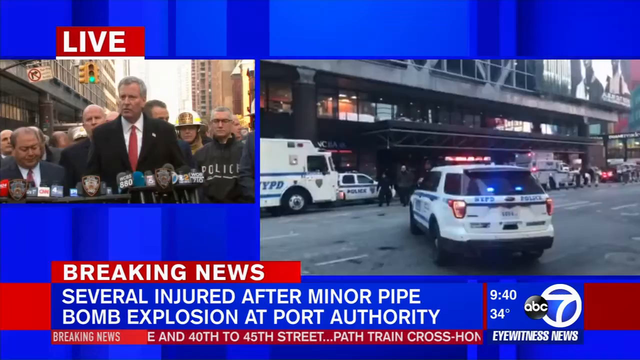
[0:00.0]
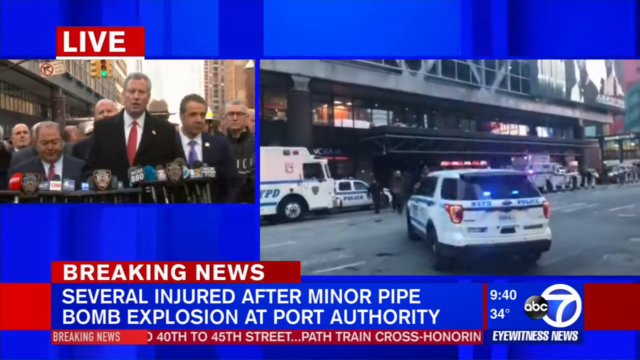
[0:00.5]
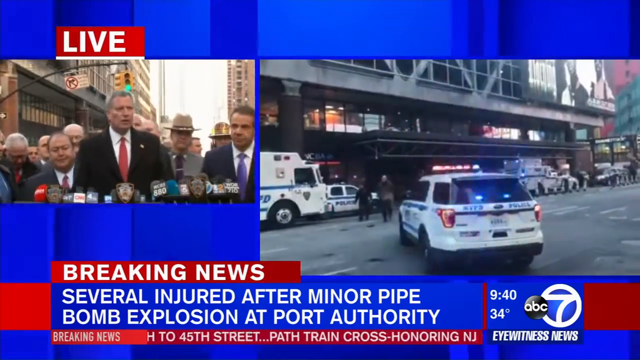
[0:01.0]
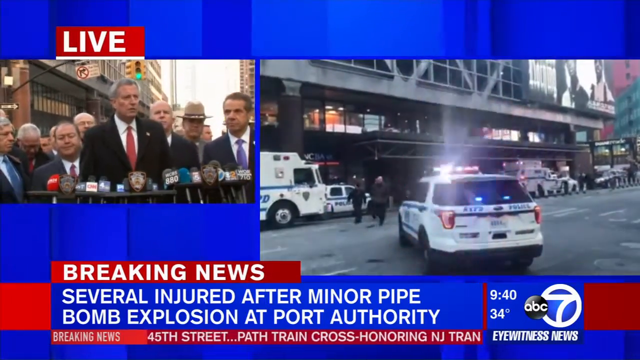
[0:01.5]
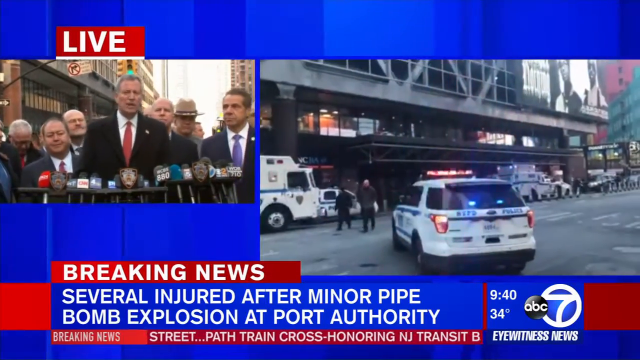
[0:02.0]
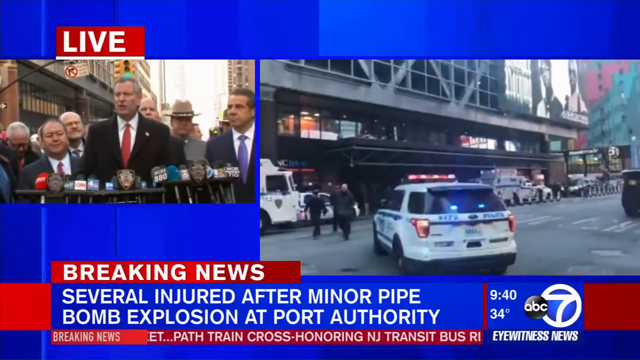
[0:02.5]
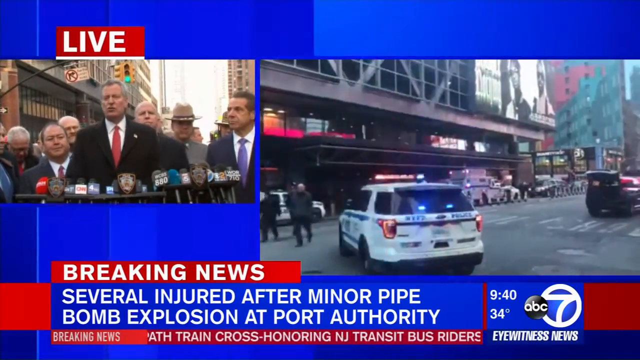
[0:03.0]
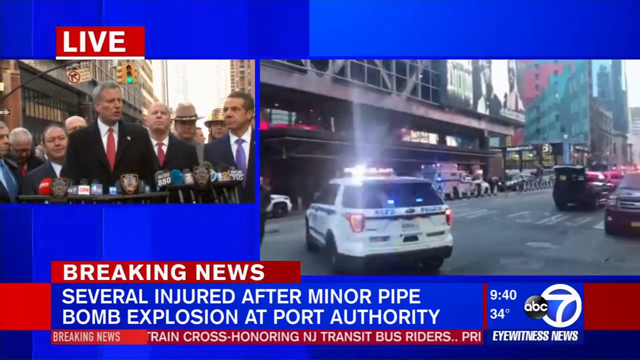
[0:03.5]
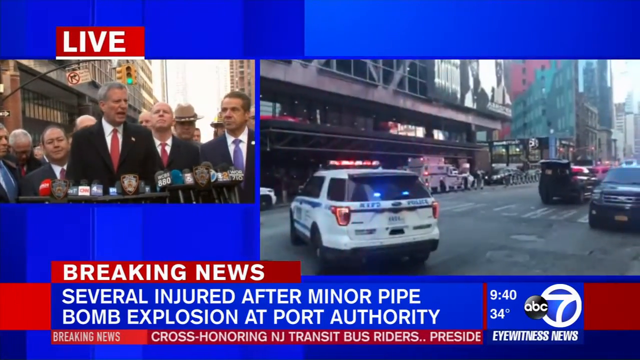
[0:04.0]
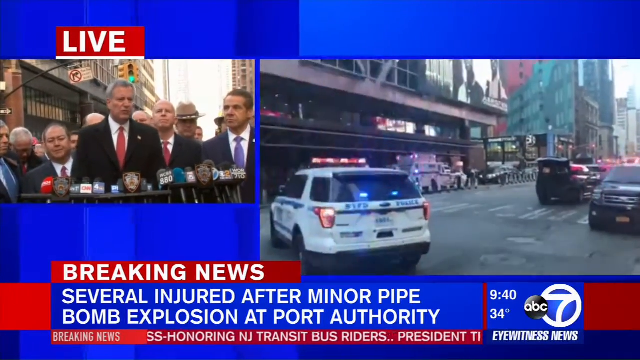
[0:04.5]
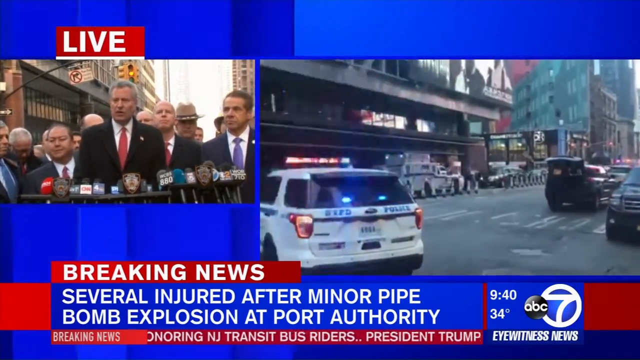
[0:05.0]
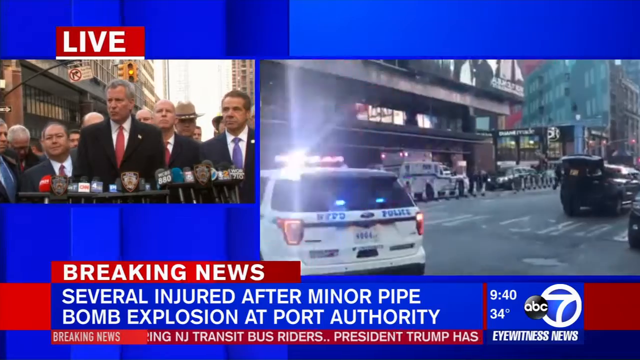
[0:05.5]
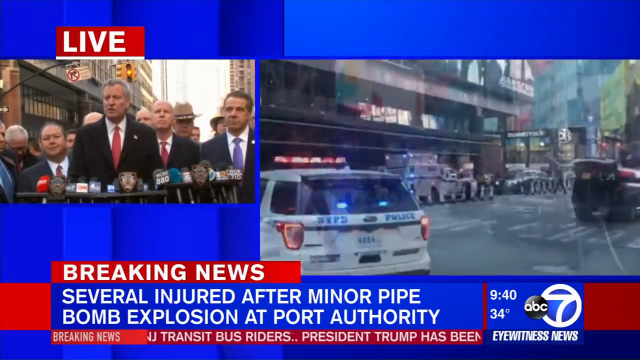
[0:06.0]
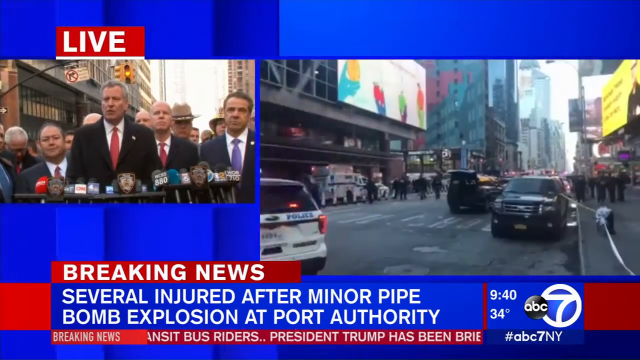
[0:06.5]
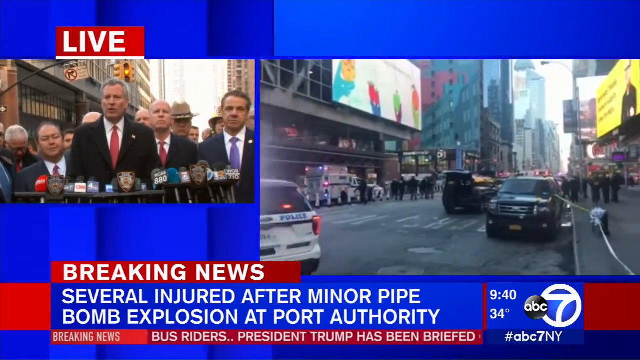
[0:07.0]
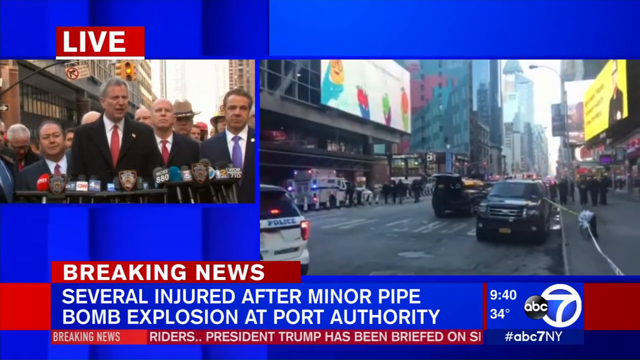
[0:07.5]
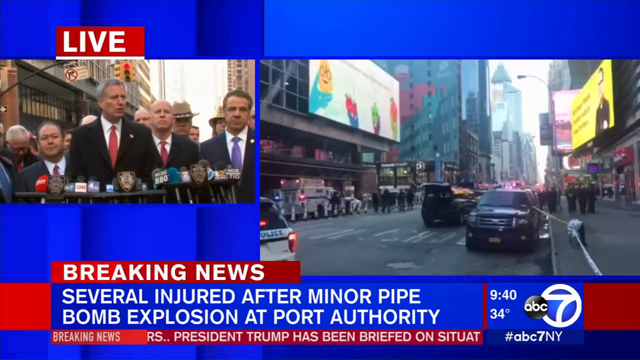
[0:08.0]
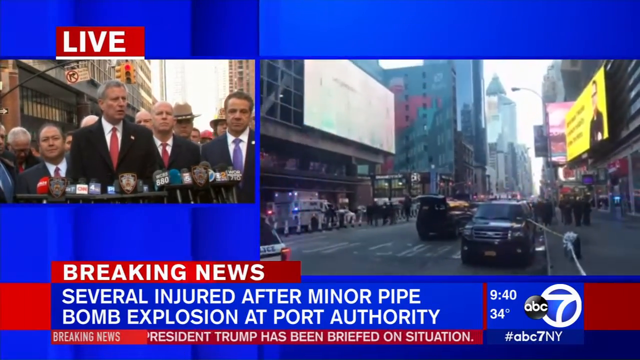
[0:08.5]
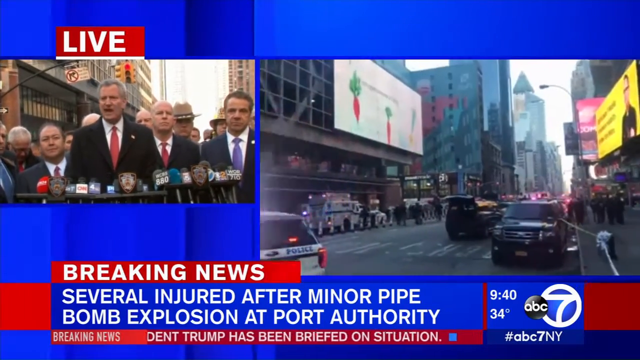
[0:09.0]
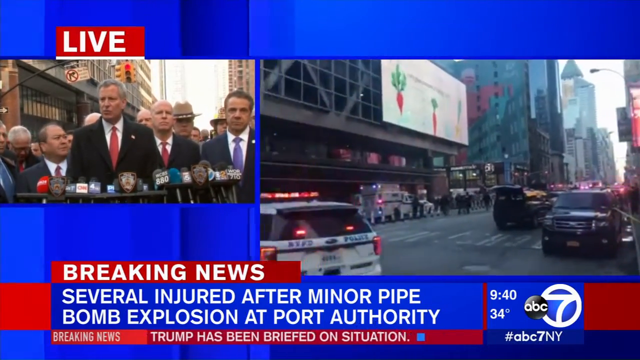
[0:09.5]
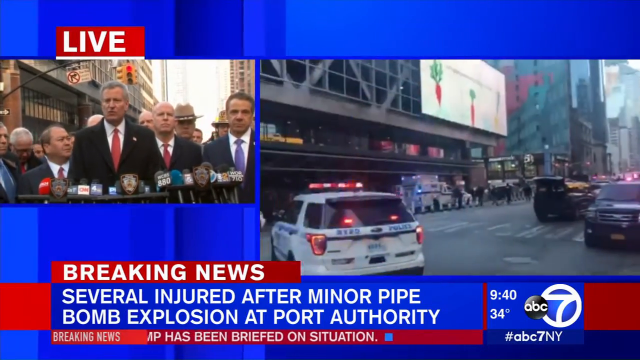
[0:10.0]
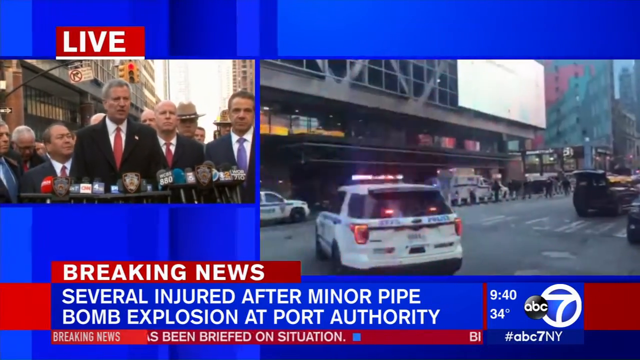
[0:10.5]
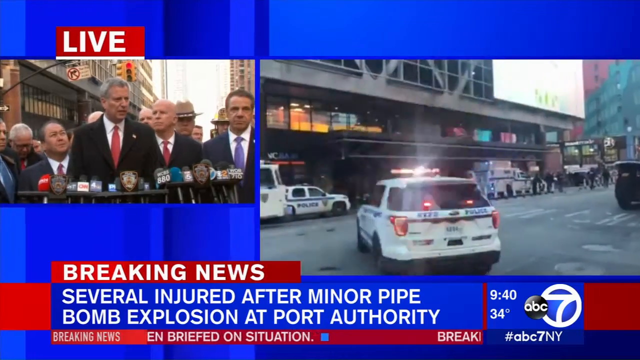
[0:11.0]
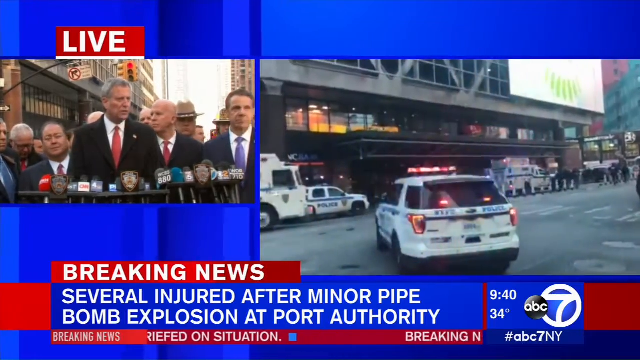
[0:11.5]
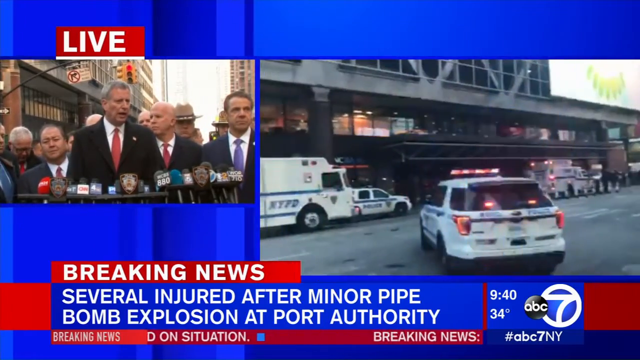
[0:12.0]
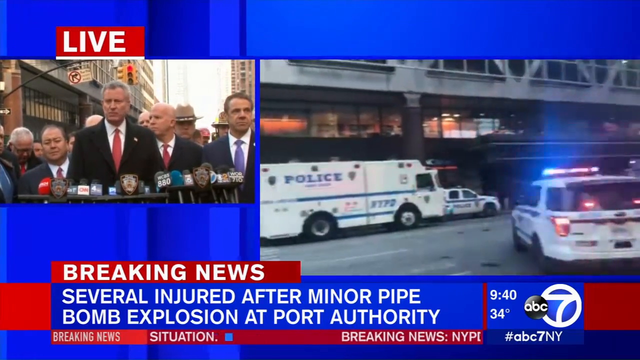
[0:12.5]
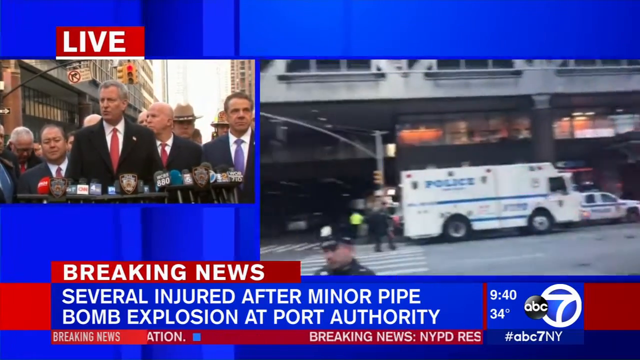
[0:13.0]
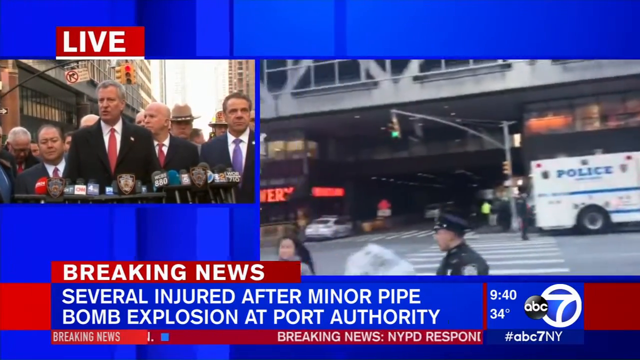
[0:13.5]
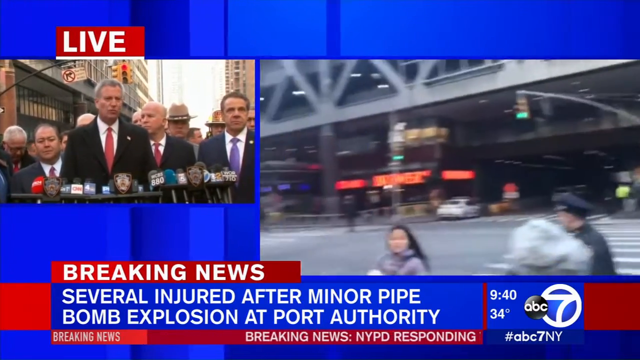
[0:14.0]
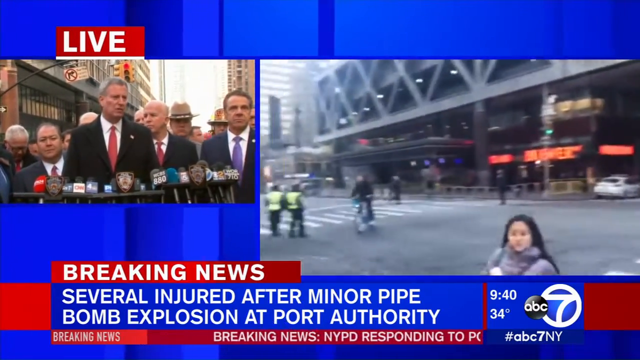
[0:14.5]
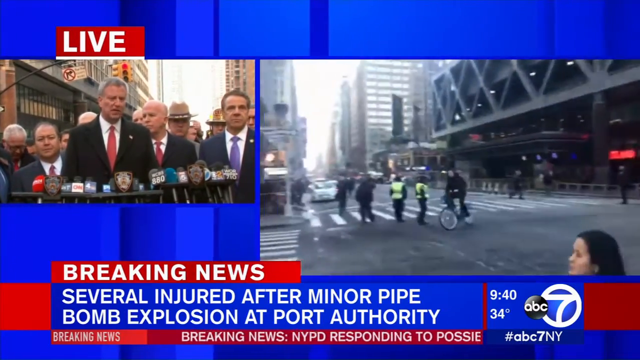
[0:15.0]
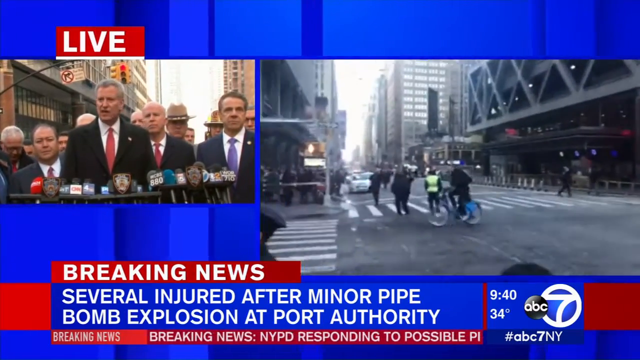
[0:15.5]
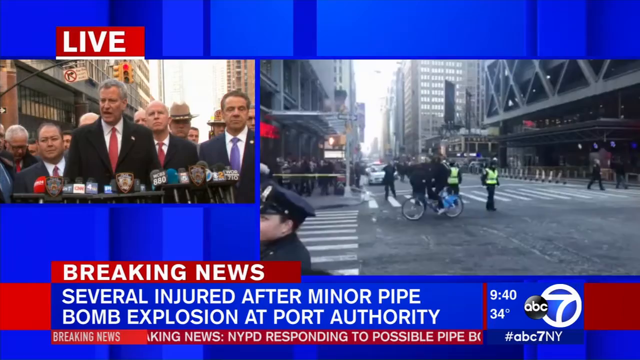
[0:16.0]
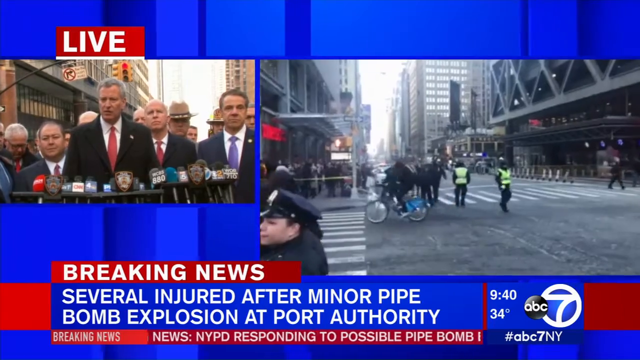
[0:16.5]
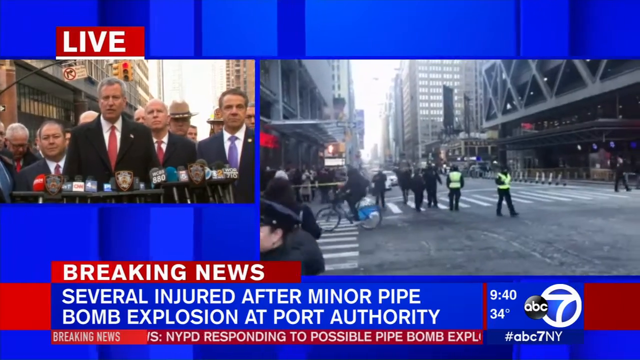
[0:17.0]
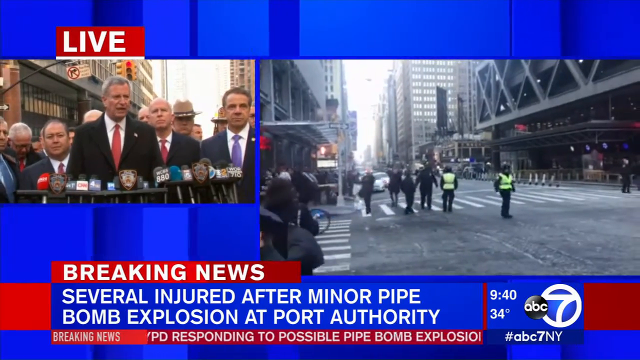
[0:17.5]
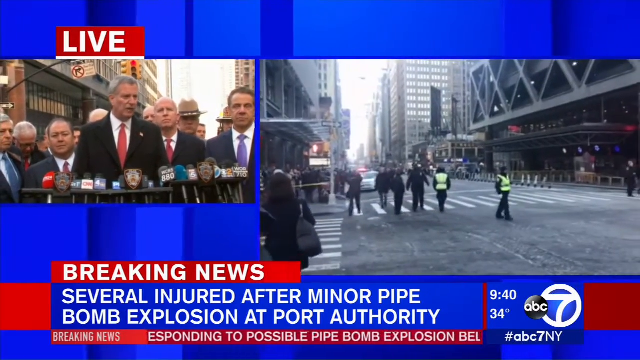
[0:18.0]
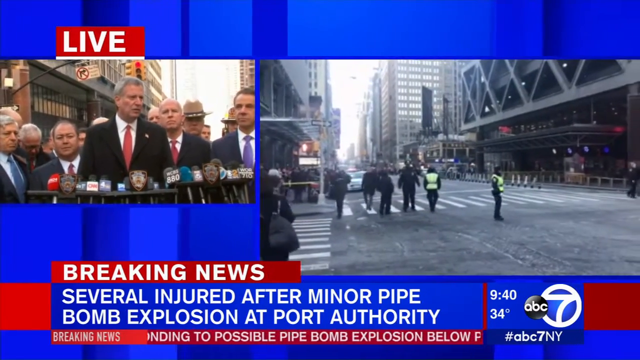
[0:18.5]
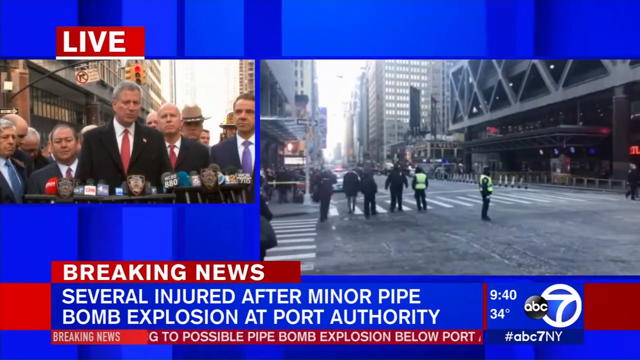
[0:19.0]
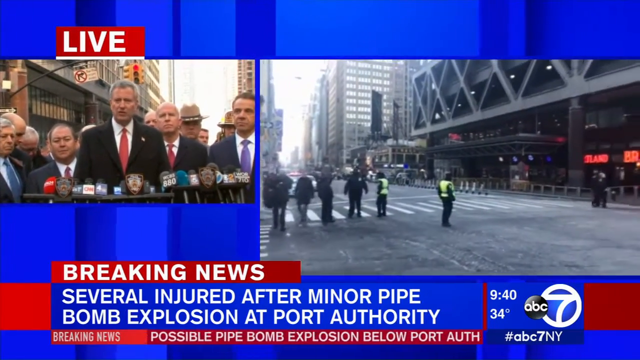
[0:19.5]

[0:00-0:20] A breaking news headline reads "Several injured after a minor pipe bomb explosion at Port Authority." On the right side of the screen, various ambulances and police vehicles are outside a building. On the left side is a live press conference, with dozens of microphones in front of a man and people behind him, including police and employees. He is taking questions. Police in the street are blocking off the area, making people walk around the scene or avoid the area entirely.